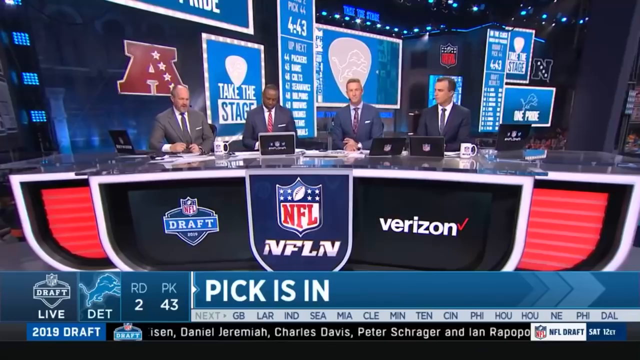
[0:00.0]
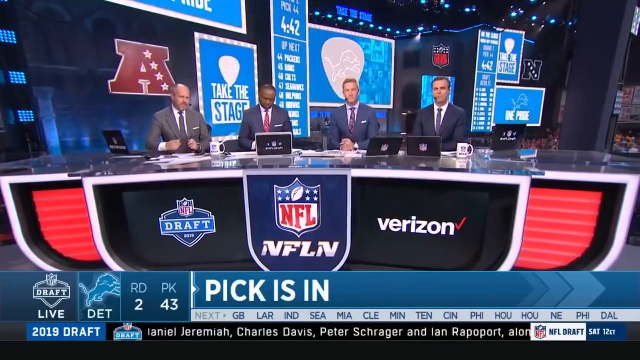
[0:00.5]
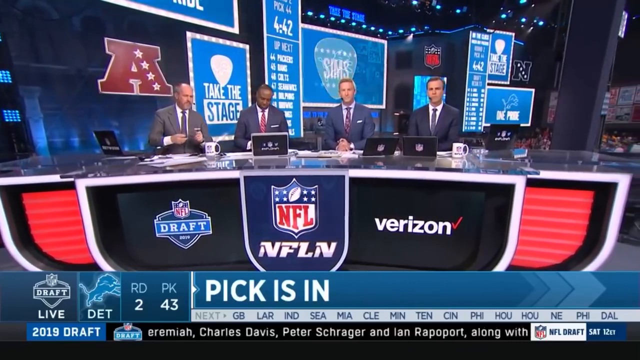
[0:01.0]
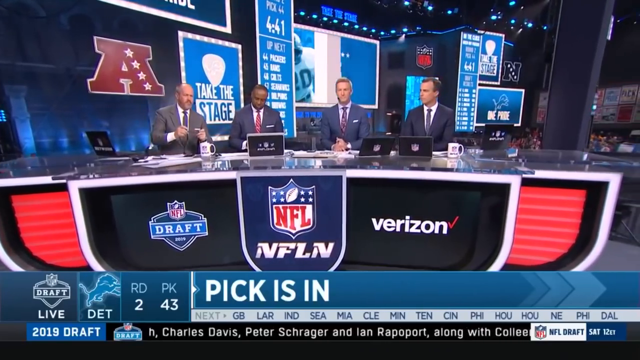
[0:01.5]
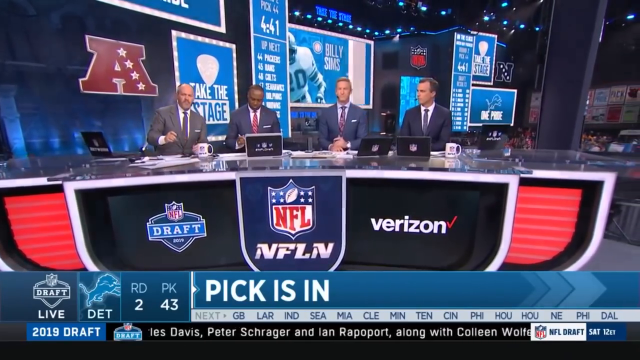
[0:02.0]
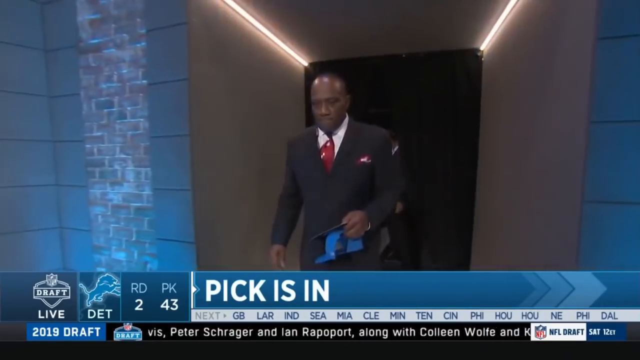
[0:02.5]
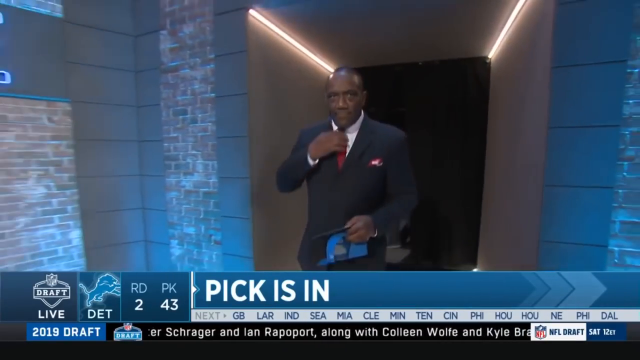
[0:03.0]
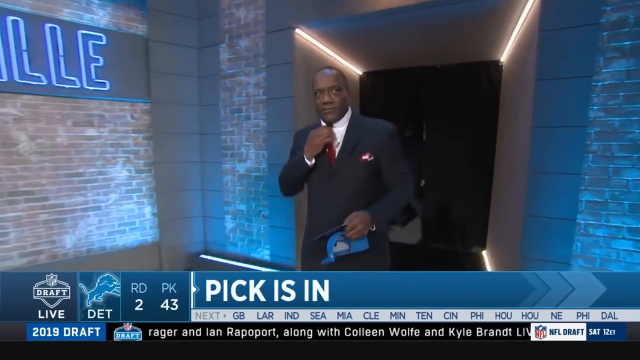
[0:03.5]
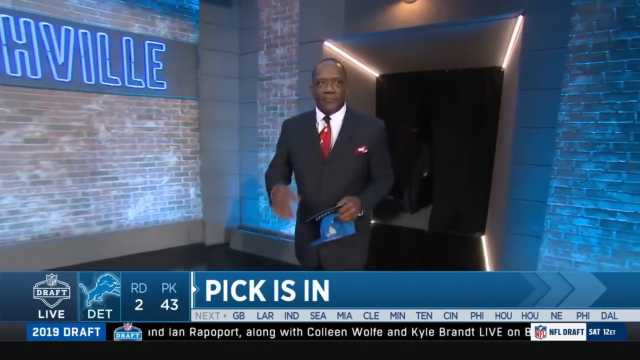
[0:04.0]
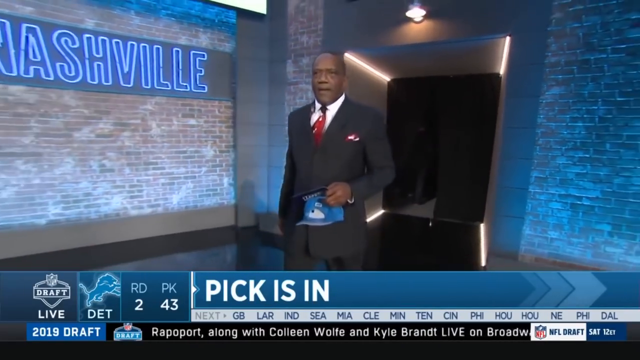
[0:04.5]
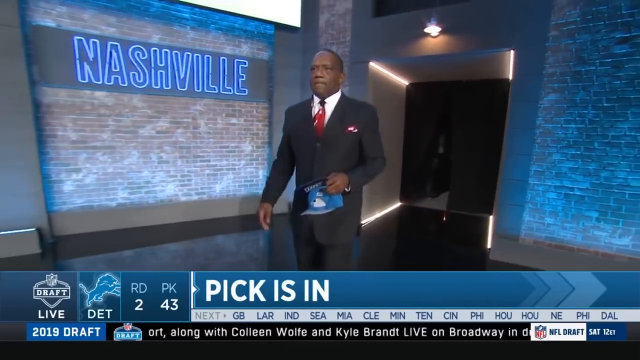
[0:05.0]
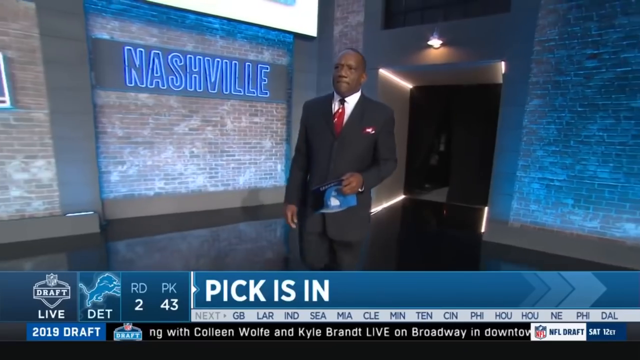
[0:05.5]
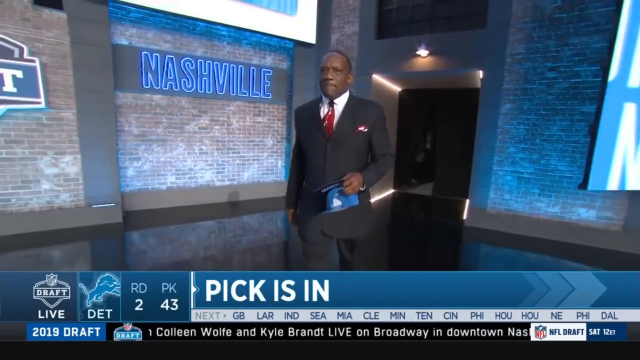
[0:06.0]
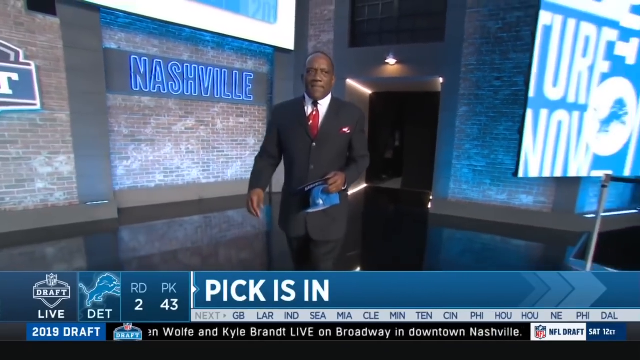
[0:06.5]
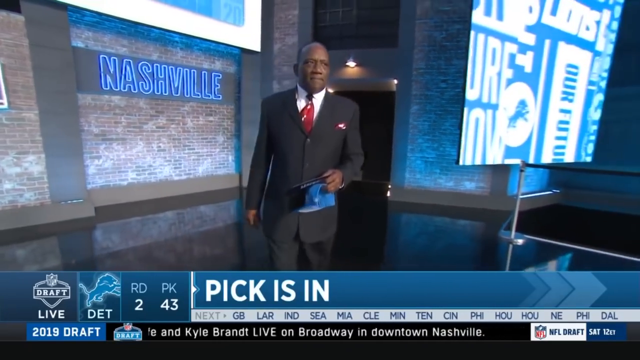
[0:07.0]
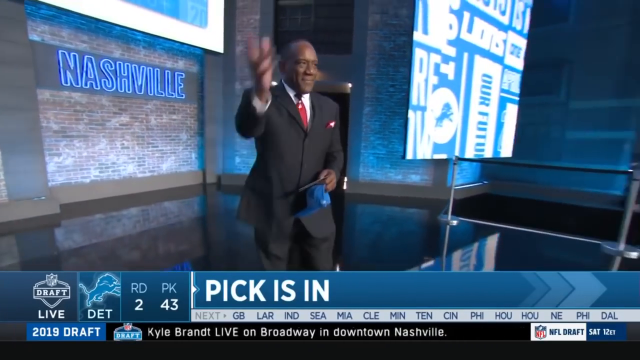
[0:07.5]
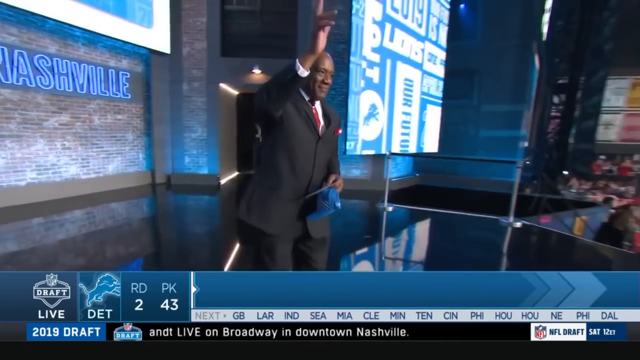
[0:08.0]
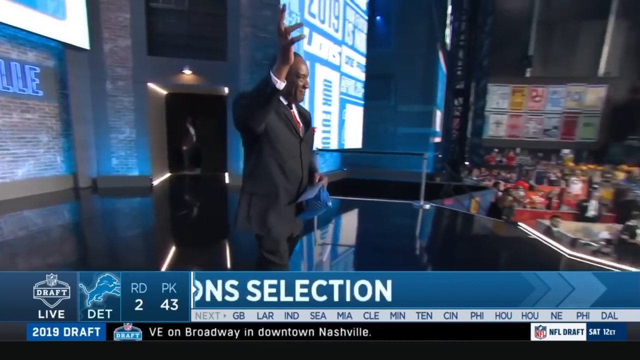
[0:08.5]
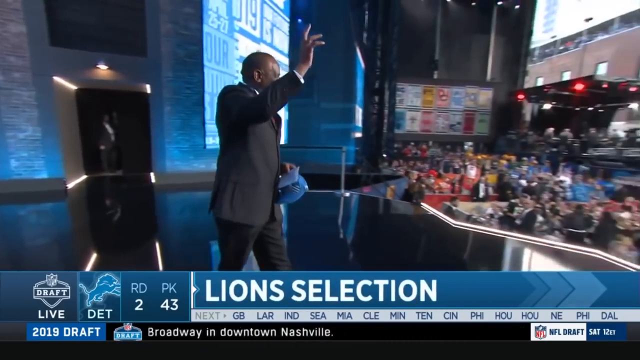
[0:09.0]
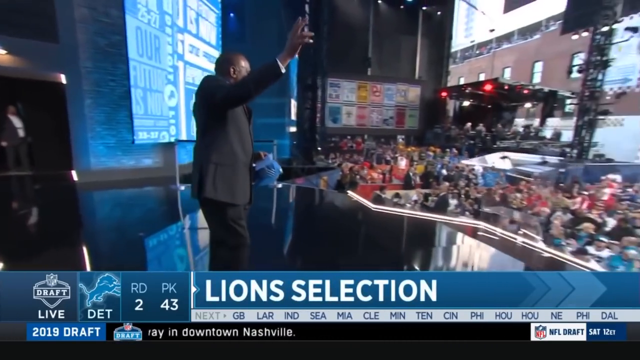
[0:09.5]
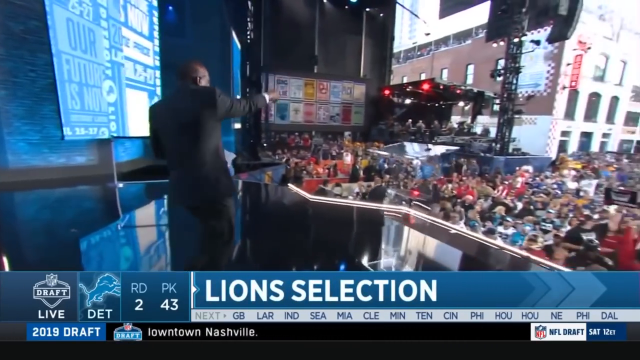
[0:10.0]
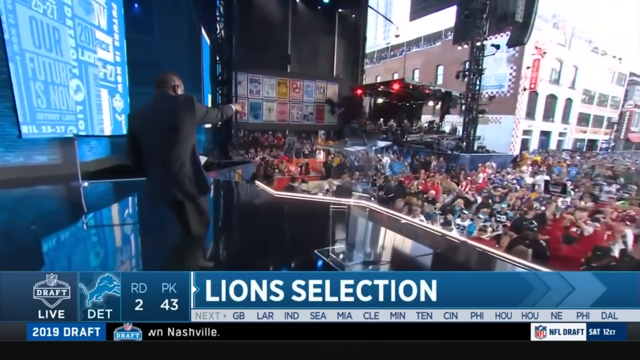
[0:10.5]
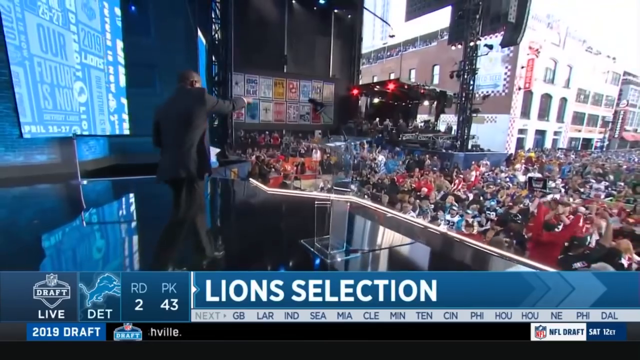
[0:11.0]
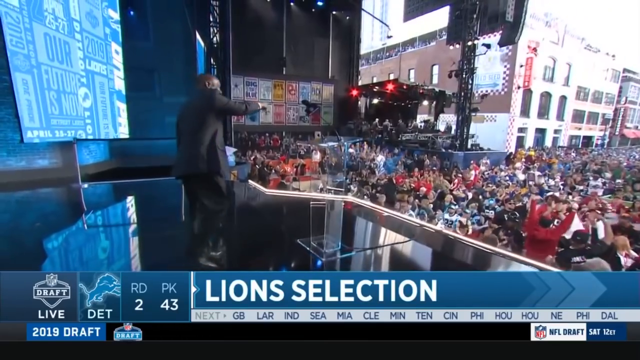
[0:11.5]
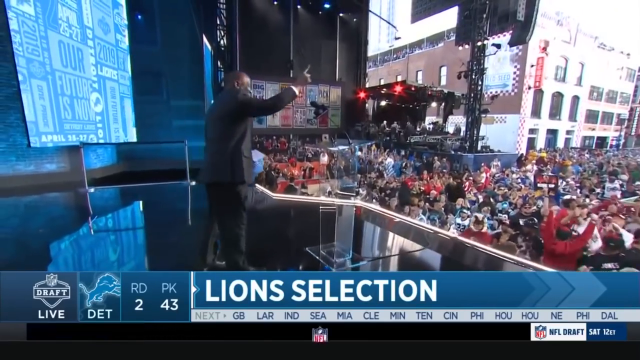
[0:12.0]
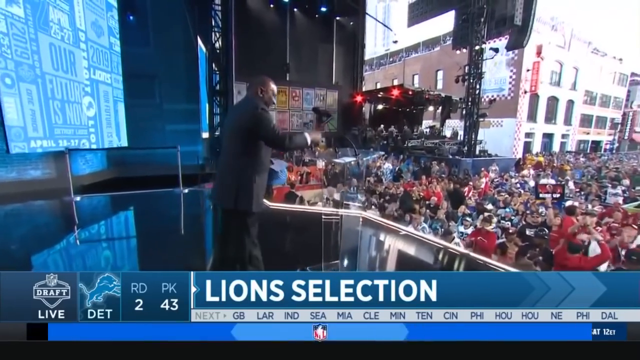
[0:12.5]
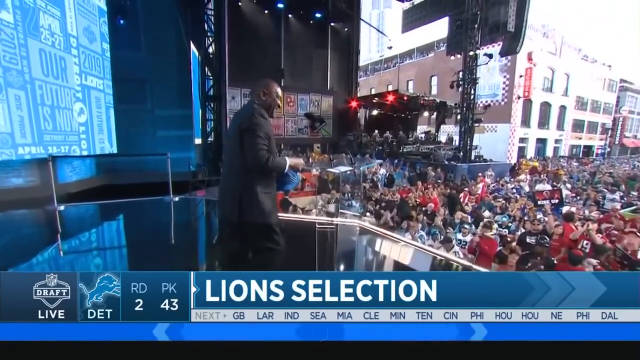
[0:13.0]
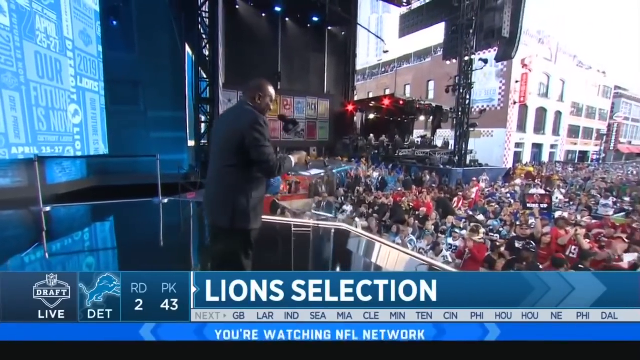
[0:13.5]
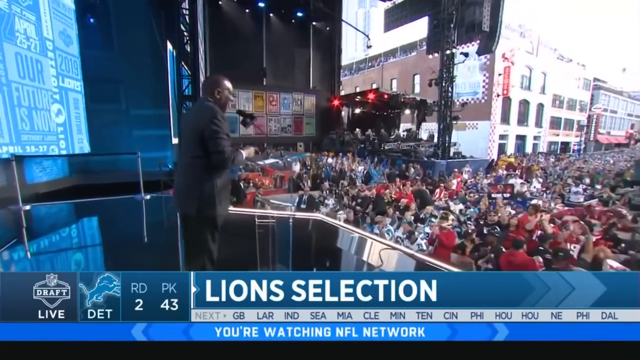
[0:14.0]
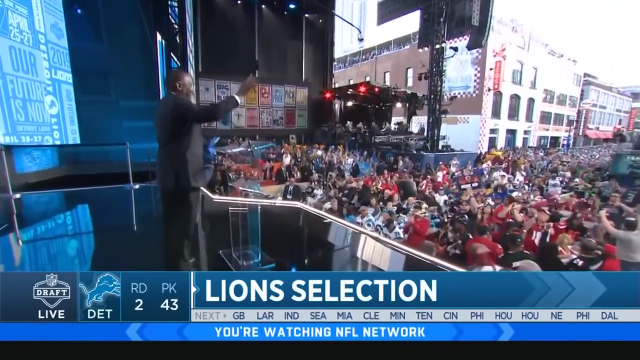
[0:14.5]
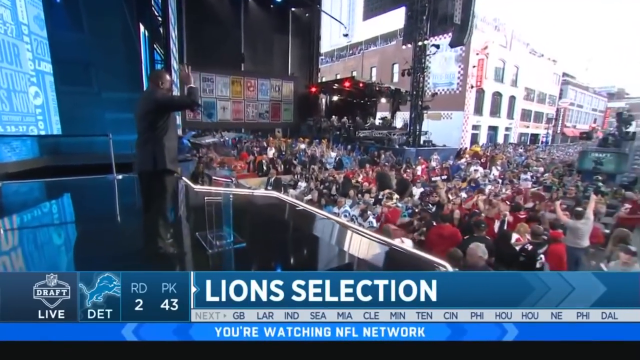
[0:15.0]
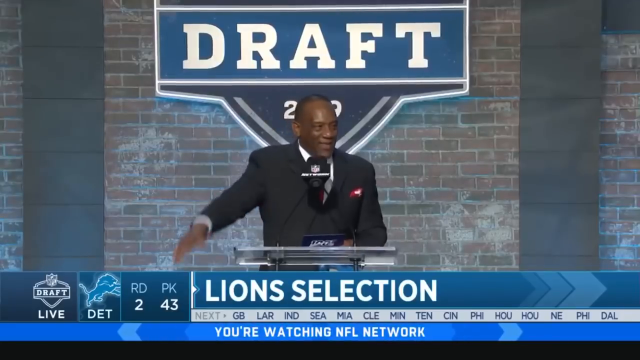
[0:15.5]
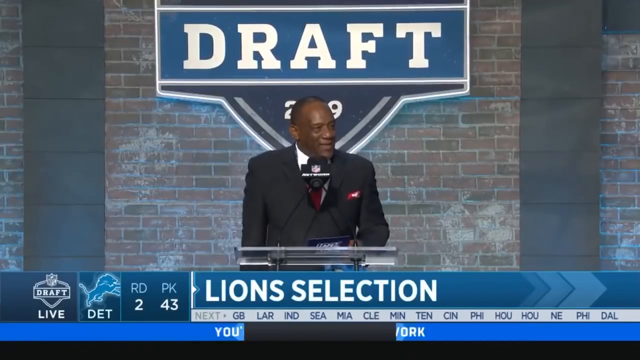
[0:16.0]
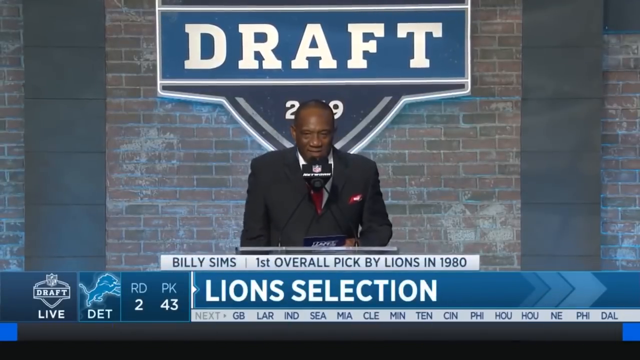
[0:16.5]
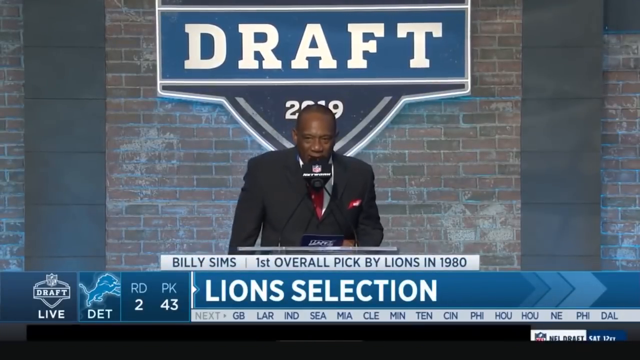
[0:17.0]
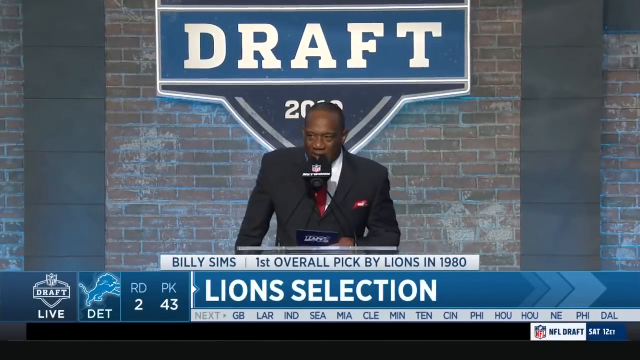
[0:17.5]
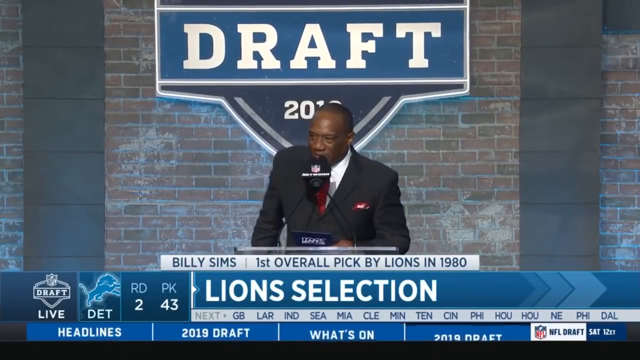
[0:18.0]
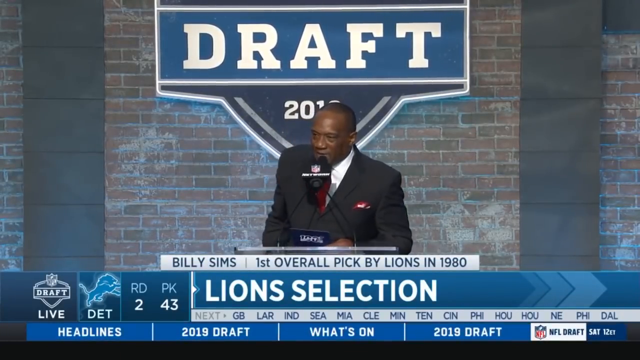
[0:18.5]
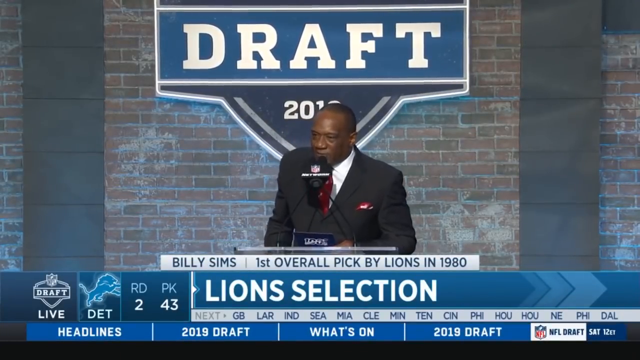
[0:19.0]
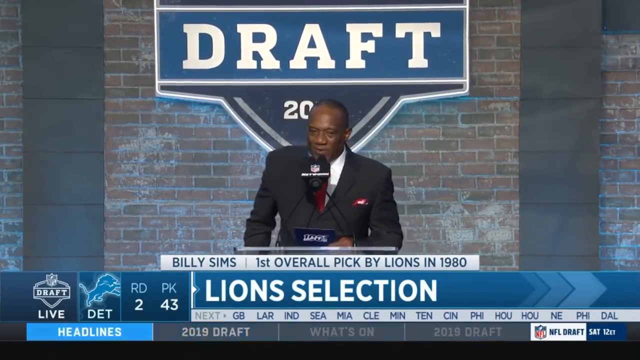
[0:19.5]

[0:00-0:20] This appears to be an NFL program. Four people sit at a desk, all wearing suits, with various papers and laptops in front of them. The desk has the NFL logo in the middle, with "NFL Draft" on the left and "Verizon" on the right; these are all on black, and to the right and left of them there is a kind of red panel. Lots of graphics are behind them, including "take the stage" in white writing on a blue background and a red A with four stars. The camera pans from right to left, then cuts to a black man in a suit with a red tie walking through somewhere. He walks into a room with bricks that has "Nashville" in blue neon lighting, and at the bottom "pick is in" appears in white writing on a blue background. He continues to walk and waves; it seems to be like a media circus. He walks onto a stage, starts waving, points to someone in the crowd, and goes to a very clear plexiglass lectern with a microphone. The camera cuts to a front view of him, with "draft" behind him on the brickwork in white writing on a blue background. He starts speaking into the microphone. Text reading "Billy Simms first overall pick by Lions in 1980" appears just above "Lion selection" at the bottom.